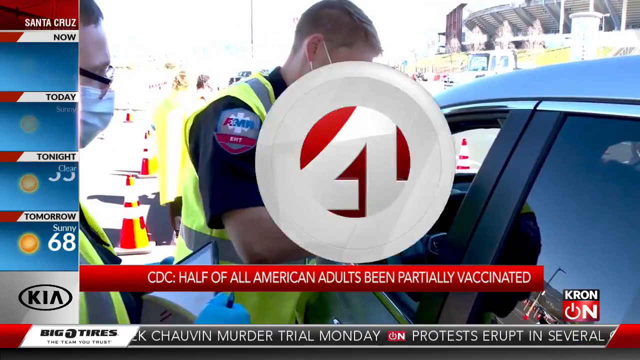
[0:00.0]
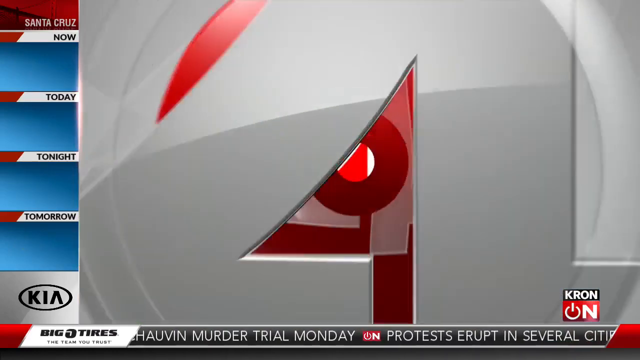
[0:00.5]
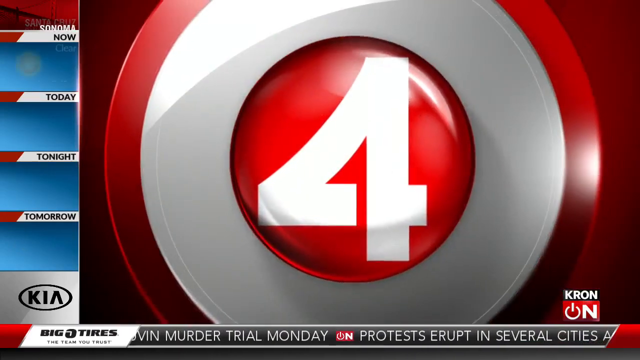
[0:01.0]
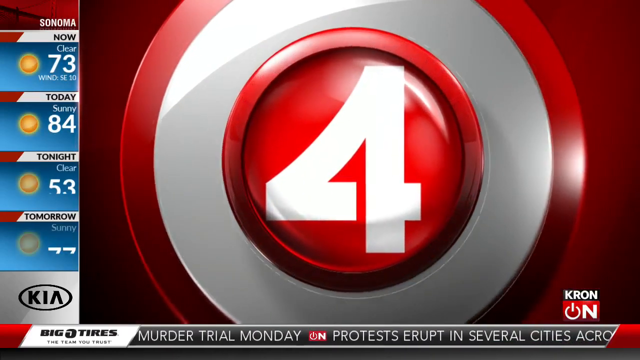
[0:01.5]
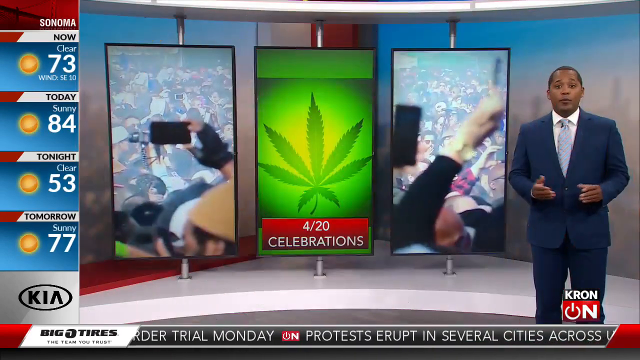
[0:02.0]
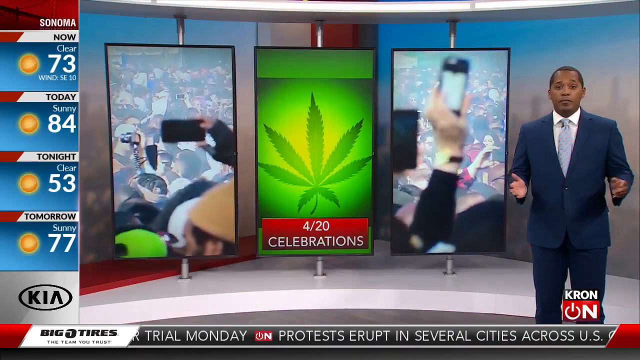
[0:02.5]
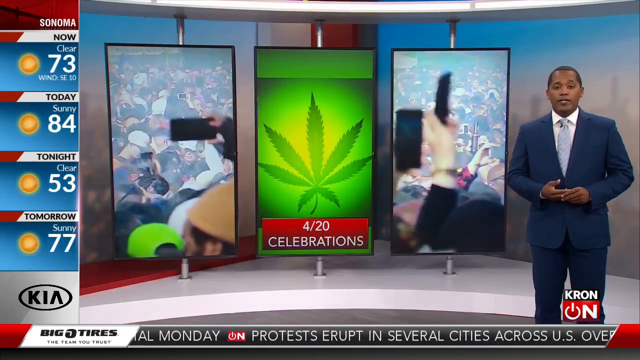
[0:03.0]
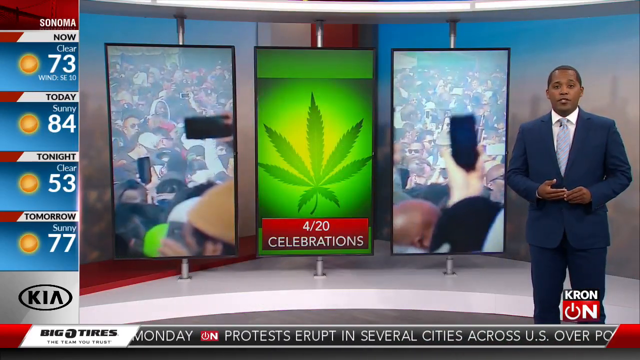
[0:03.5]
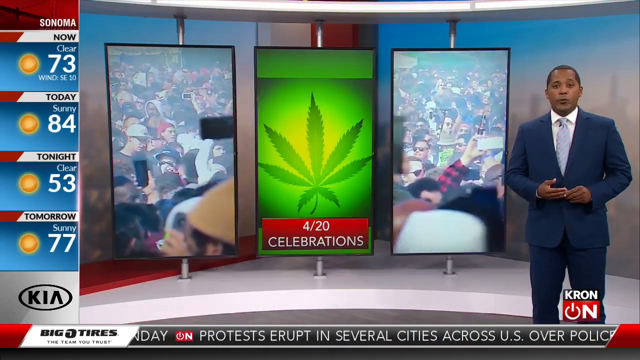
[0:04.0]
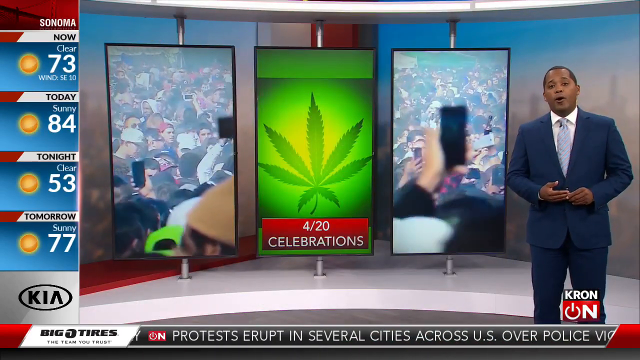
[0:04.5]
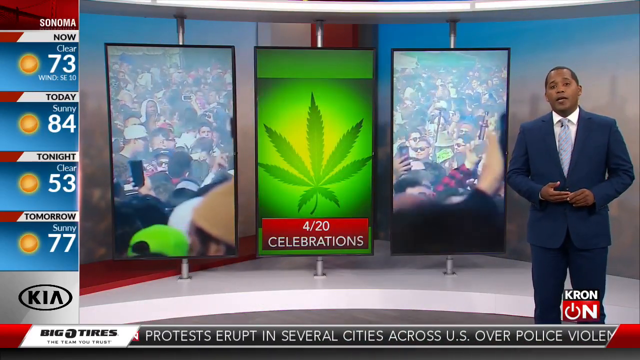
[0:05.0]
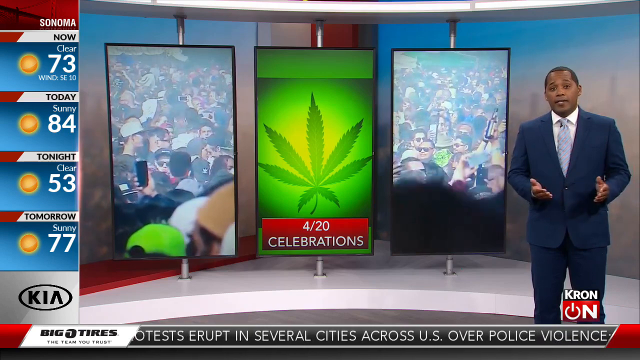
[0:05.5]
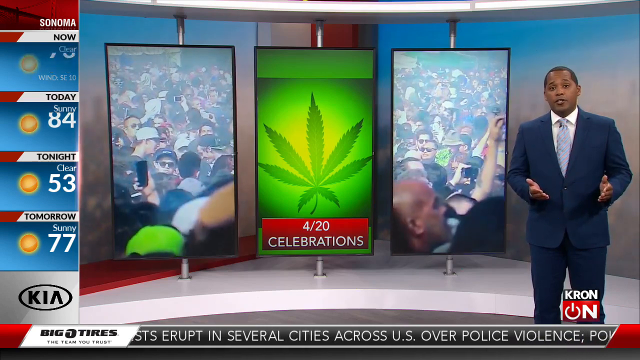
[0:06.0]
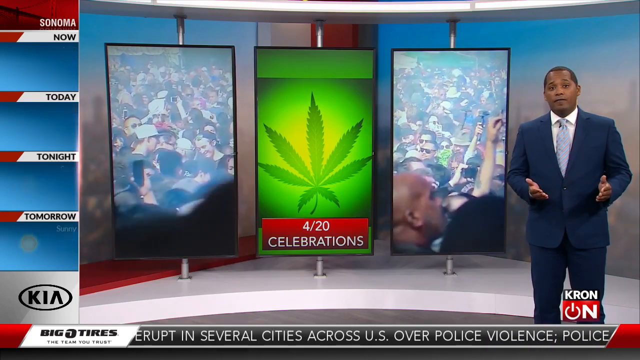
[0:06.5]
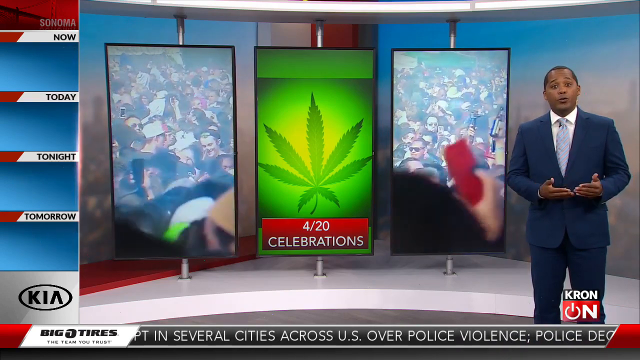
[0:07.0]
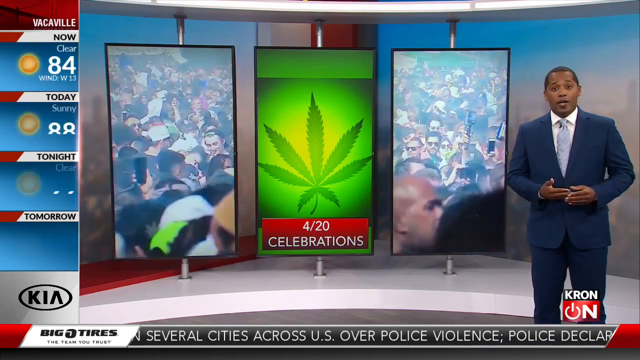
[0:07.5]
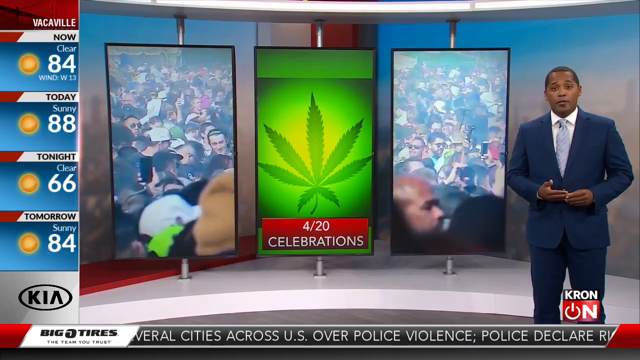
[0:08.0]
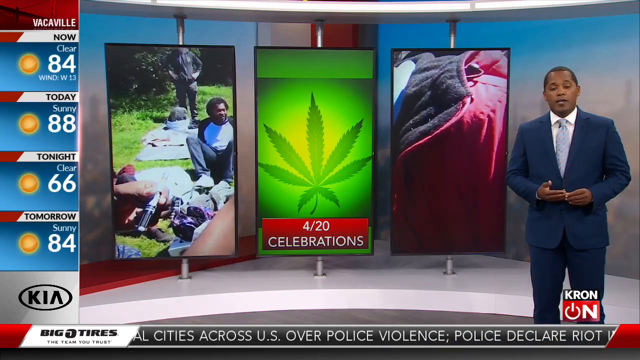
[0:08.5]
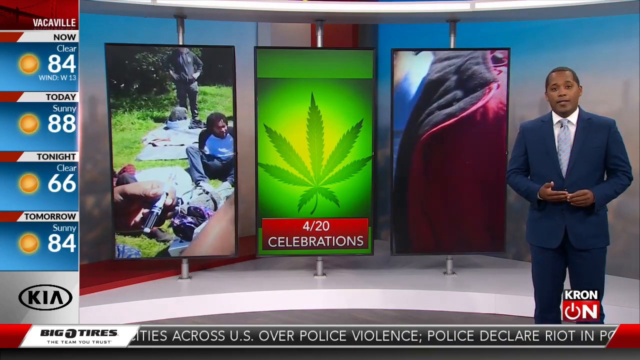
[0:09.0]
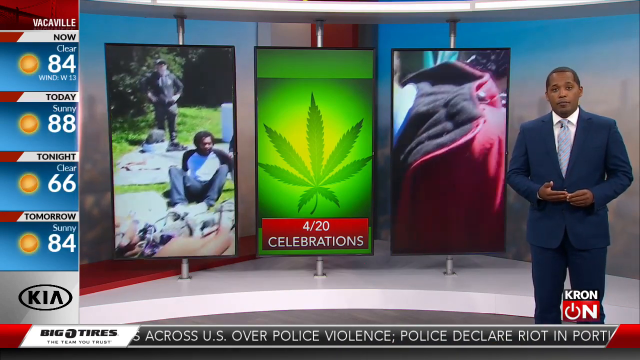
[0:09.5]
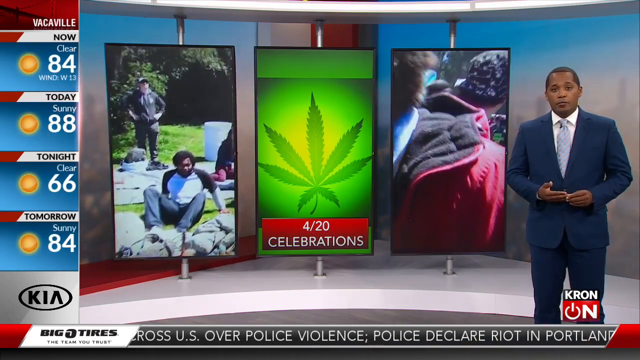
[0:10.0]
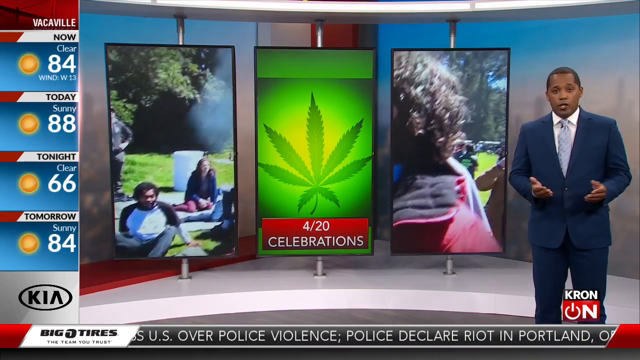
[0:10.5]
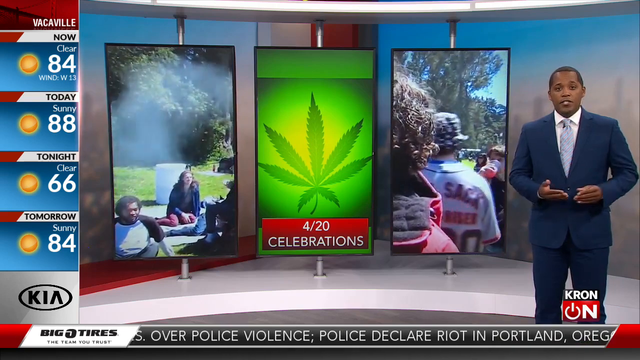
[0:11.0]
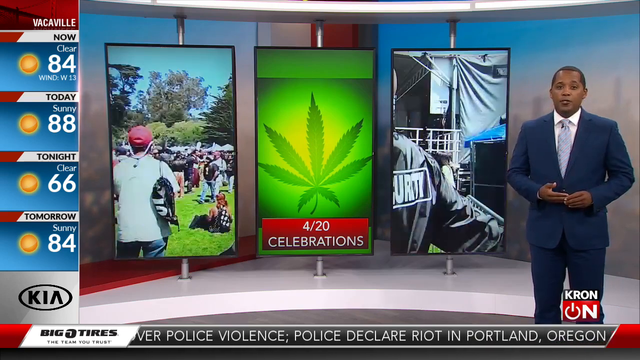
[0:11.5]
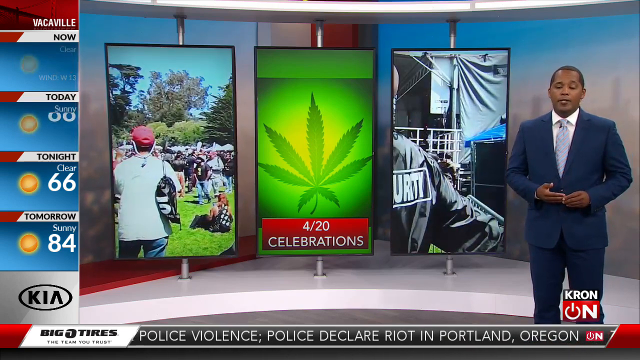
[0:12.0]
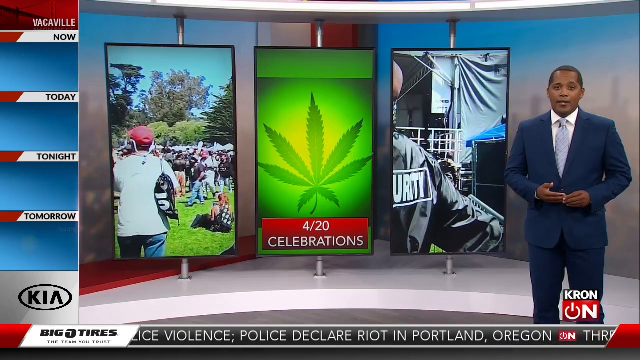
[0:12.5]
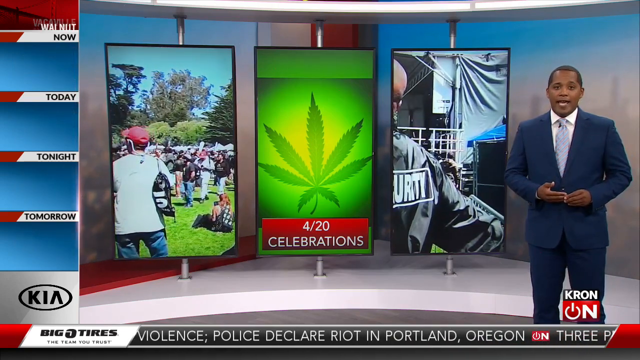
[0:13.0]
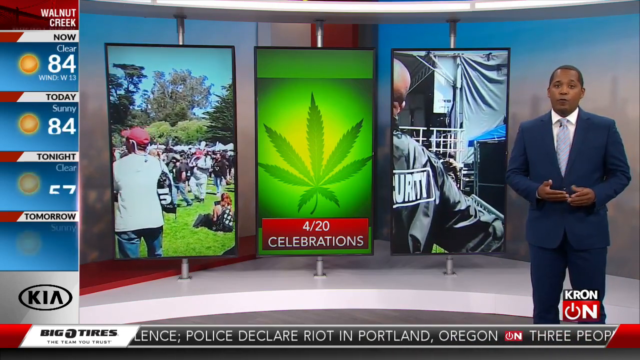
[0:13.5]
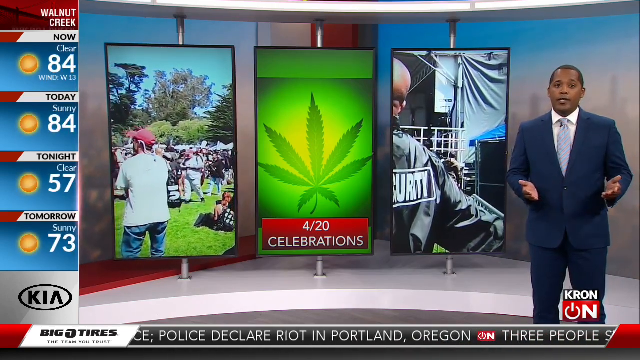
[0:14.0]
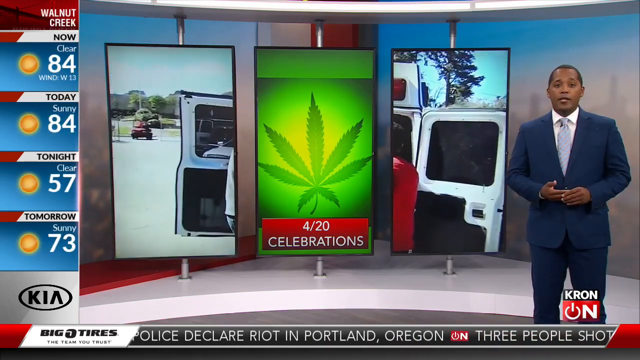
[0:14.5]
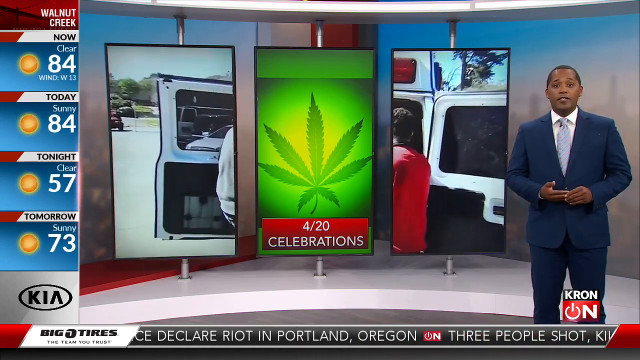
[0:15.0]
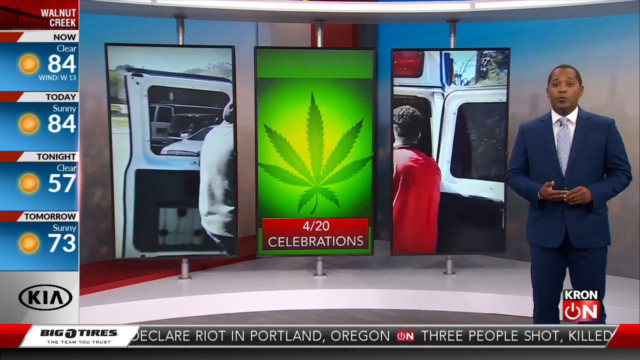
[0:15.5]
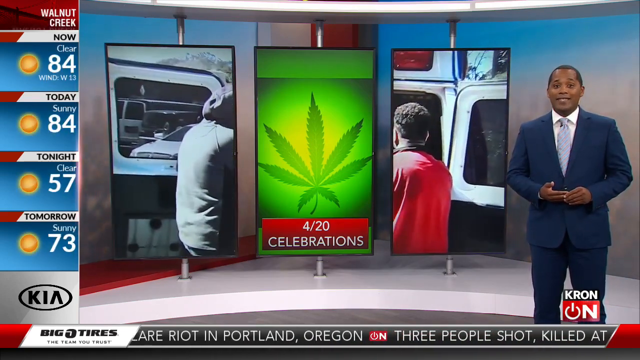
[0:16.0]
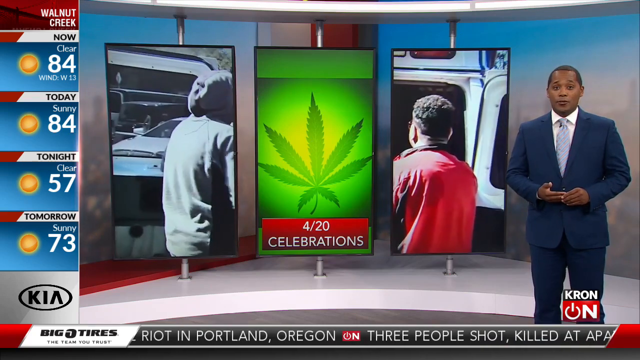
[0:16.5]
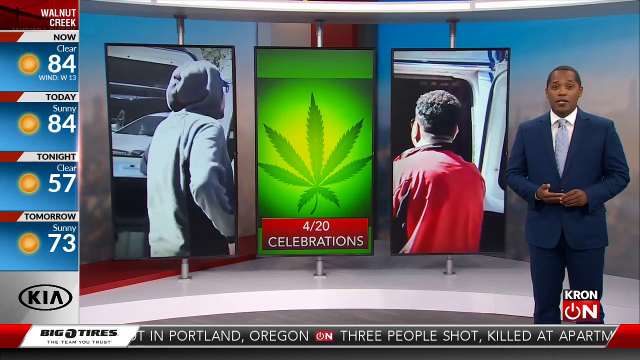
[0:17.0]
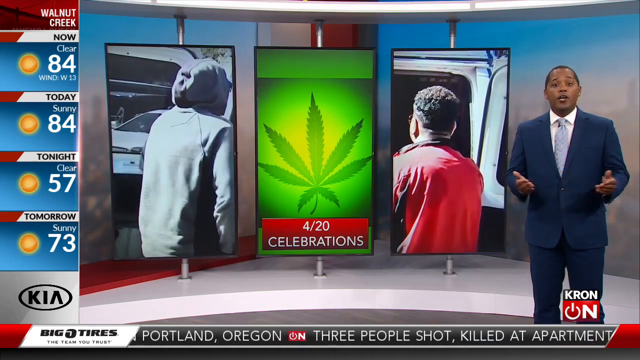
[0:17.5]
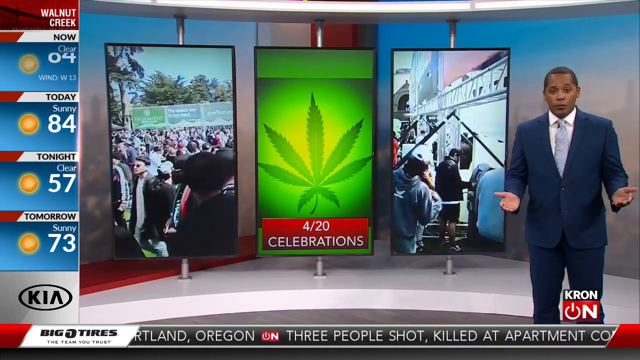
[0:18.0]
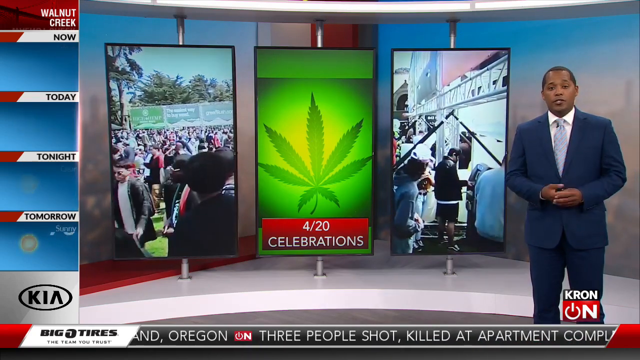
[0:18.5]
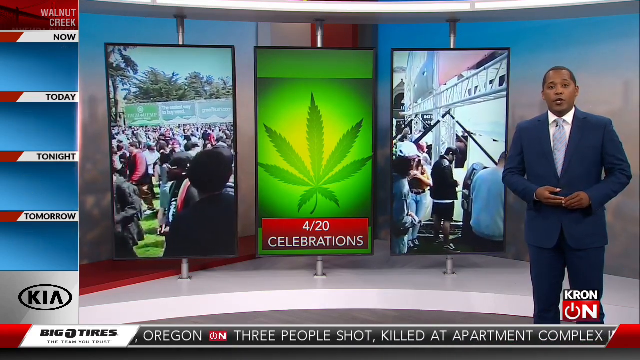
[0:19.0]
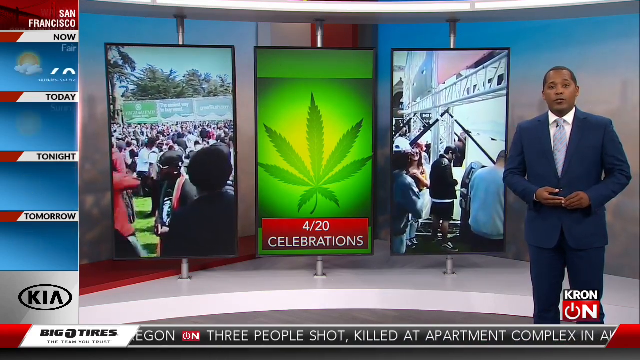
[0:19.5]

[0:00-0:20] The video opens with the number 4, which is the name of the news channel. The main subjects are people, many of whom look to be in their late 20s or early 30s, gathered in a crowded area where they appear to be attending an event; there are too many to count. A man in his 30s seems to be reading the news, with videos showing behind him. Other people appear to be having a picnic, sitting on fleeces or towels. On the side of the screen, a weather display shows conditions for now, today, tonight and tomorrow, and it keeps changing as time goes by. Between the videos there is a picture with the text "4/20 celebration".